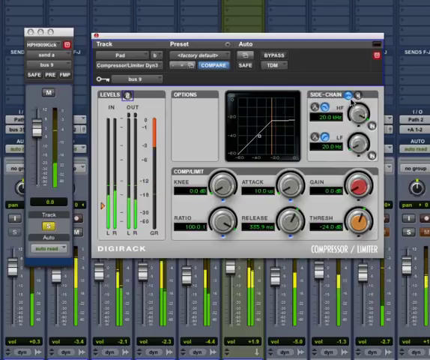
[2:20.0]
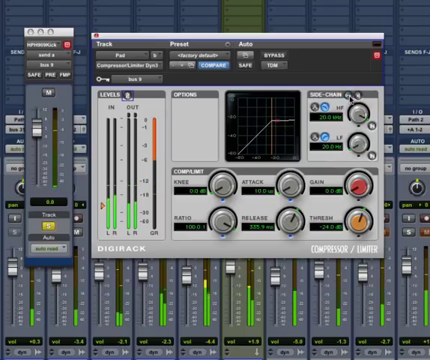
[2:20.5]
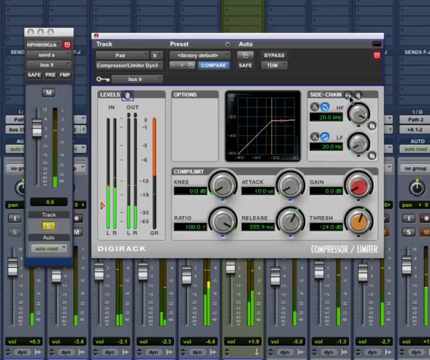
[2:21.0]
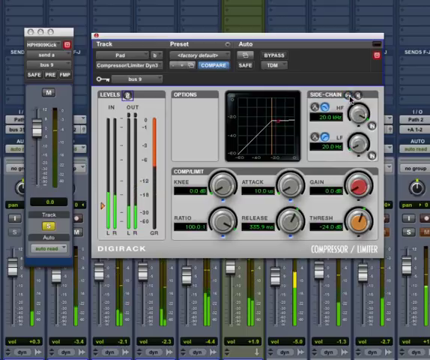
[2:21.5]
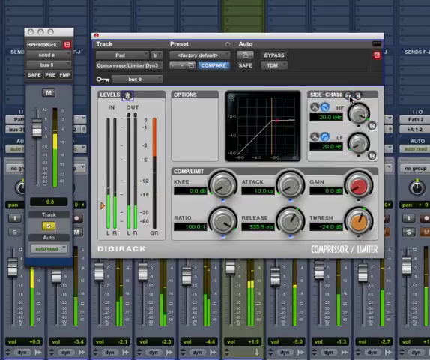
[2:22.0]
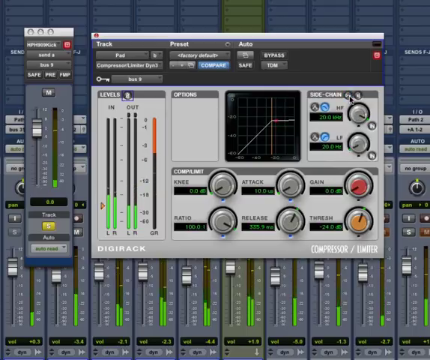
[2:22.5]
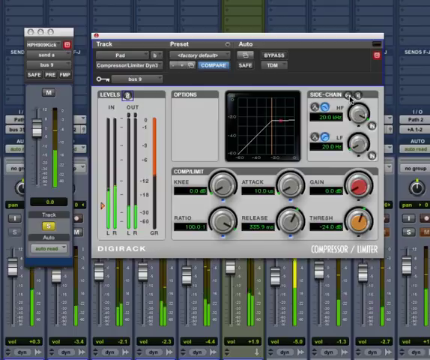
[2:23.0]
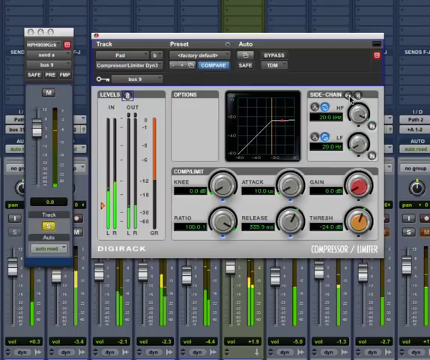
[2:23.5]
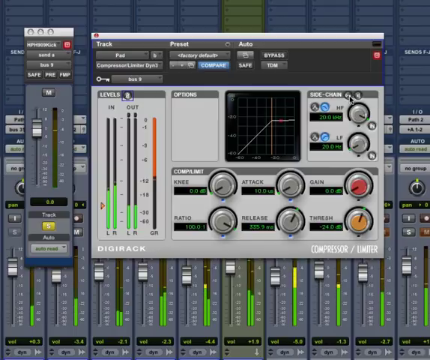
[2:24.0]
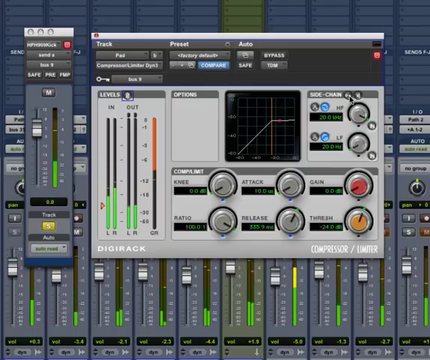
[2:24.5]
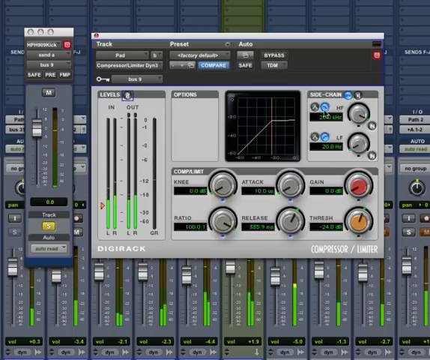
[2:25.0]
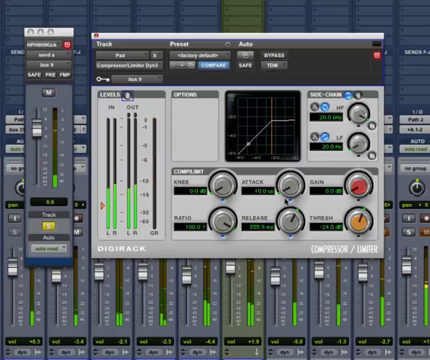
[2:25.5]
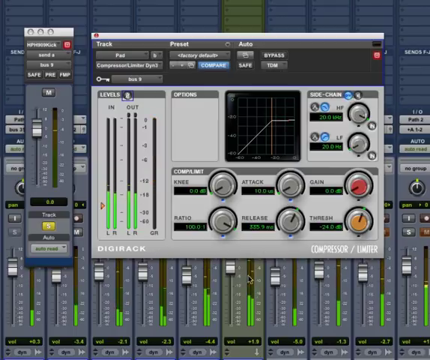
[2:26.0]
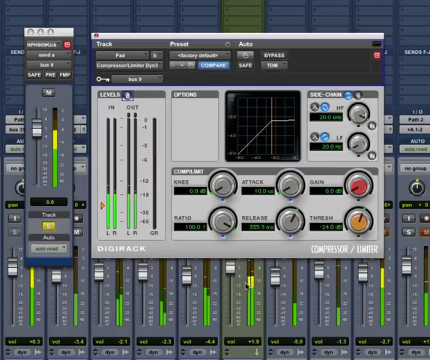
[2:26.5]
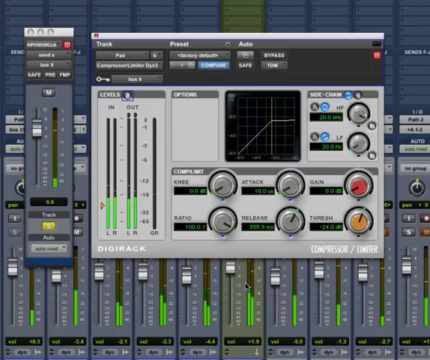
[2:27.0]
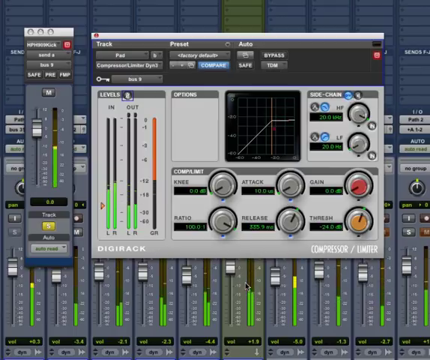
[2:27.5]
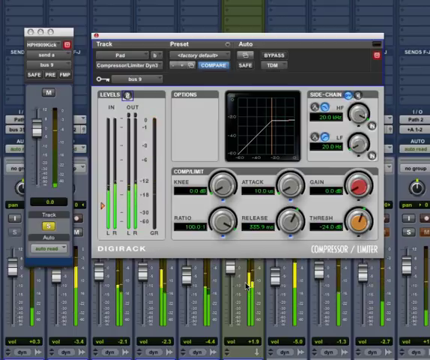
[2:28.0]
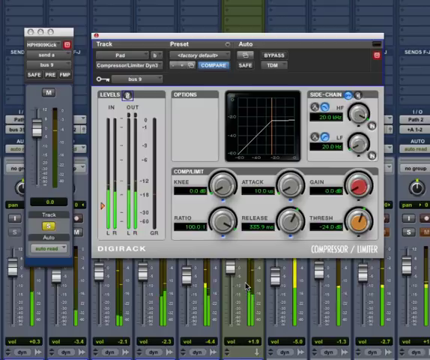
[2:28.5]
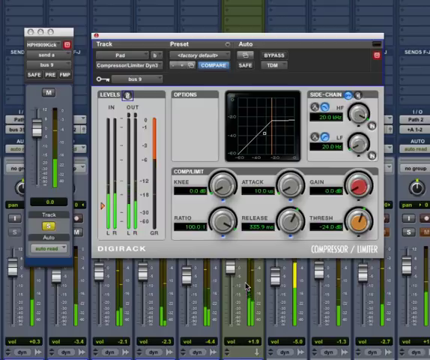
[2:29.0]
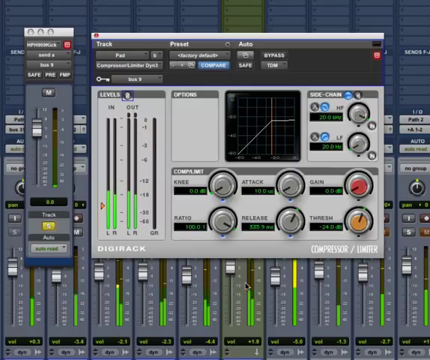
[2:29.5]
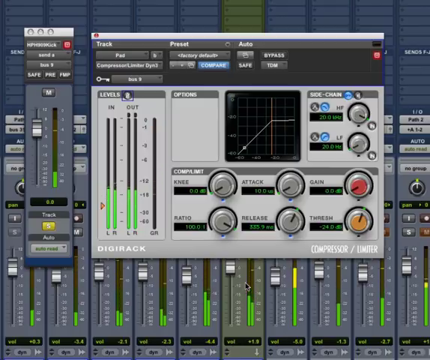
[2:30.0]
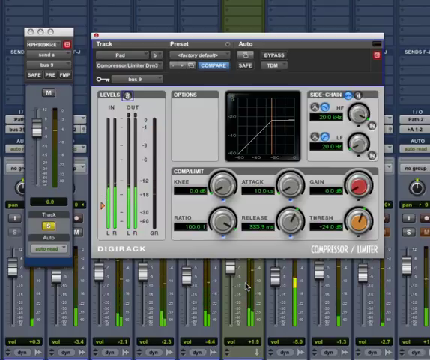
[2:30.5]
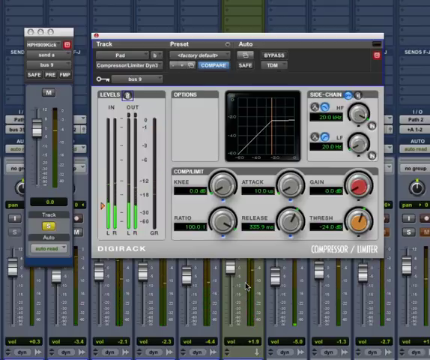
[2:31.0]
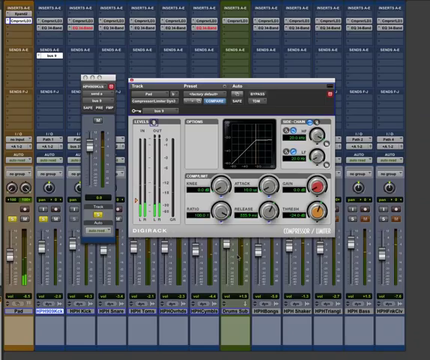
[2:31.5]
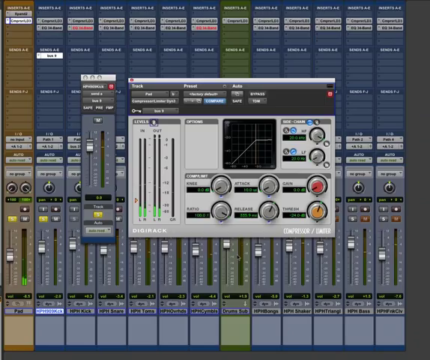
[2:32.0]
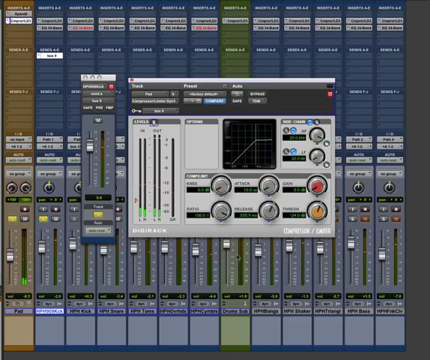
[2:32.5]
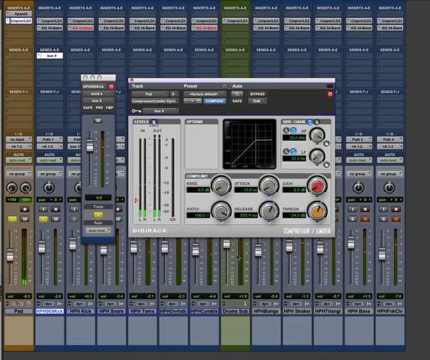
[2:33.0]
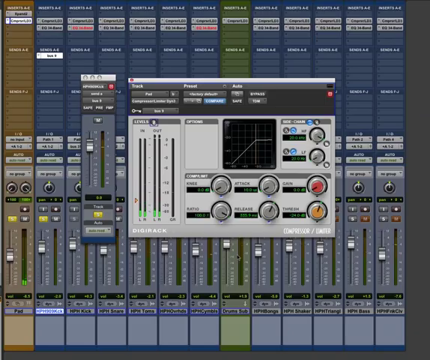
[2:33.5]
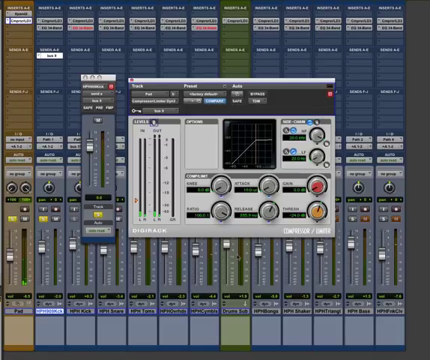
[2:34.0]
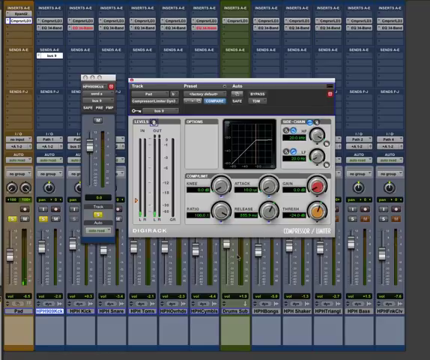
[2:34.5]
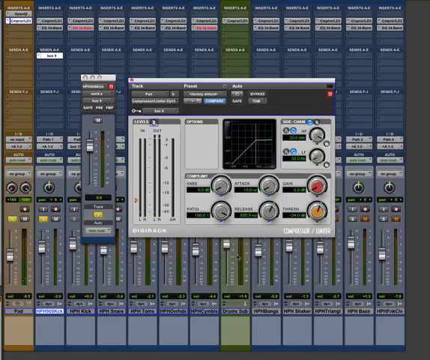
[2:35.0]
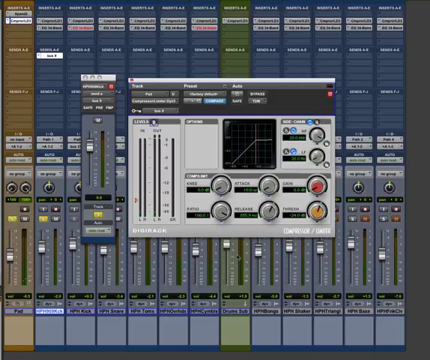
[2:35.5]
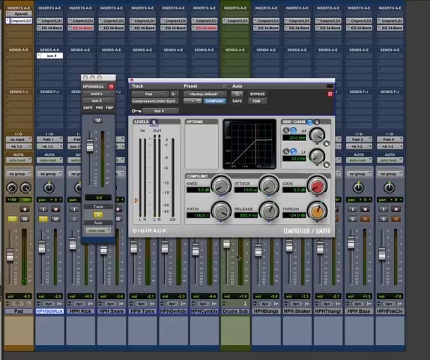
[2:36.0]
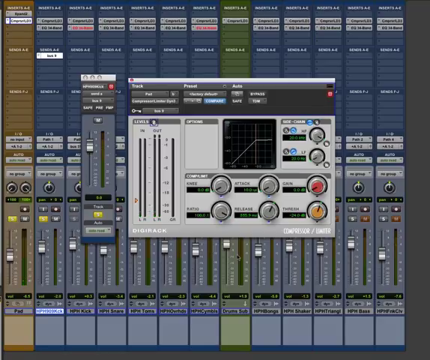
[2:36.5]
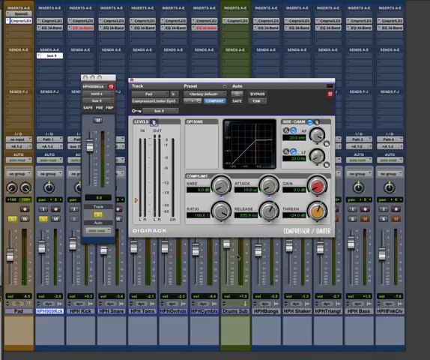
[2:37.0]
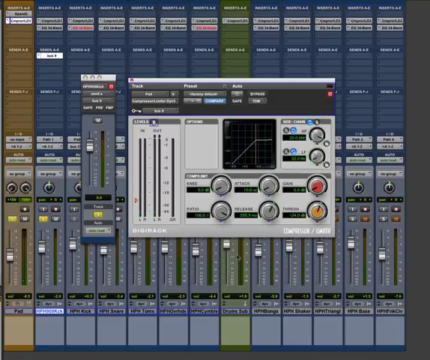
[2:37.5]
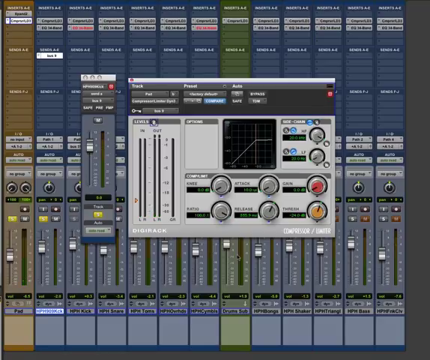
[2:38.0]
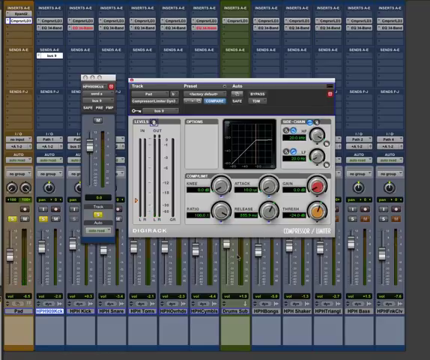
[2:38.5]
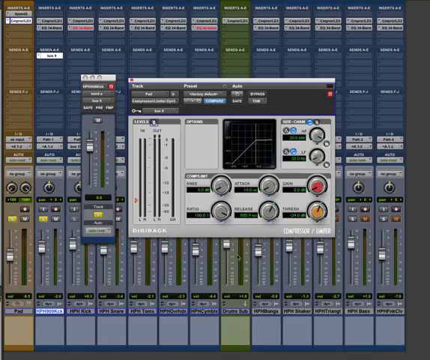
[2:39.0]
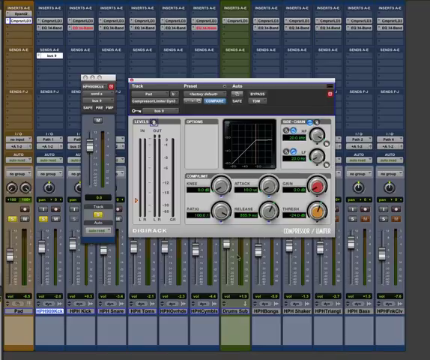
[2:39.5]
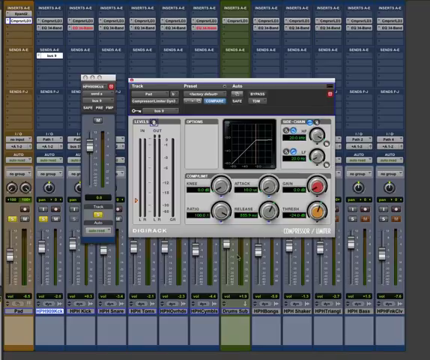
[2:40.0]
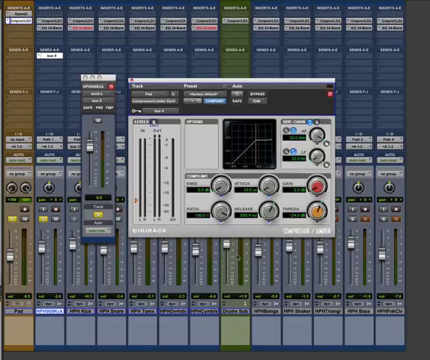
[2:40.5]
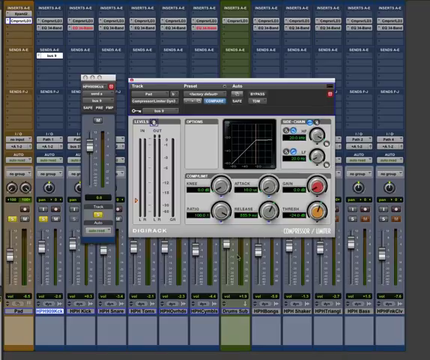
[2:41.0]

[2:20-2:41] On the blue screen, "side chain compression in Pro Tools" is written in huge white bubble letters with black outlining in a black box, going across the screen from left to right. His mouse starts in the bottom left corner and he clicks on buttons; the green things turn on and beat up and down. He turns on two more buttons, and they turn light yellow, gray, and brown. After a little while he moves his mouse upward onto the brown outlining and clicks on items reading "EQ," "dynamics," "delay," "modulation," "harmonic," "noise reduction," "dither," "sound field," "instrument," "effect." Further to the right, when he clicks, a list appears: "analog channel one (stereo)," "analog channel two (stereo)," "audio track (stereo)," a "bomb factory" entry, "bomb factory BF76 (stereo)," and "C1 comp," with "(stereo)" all down the line.